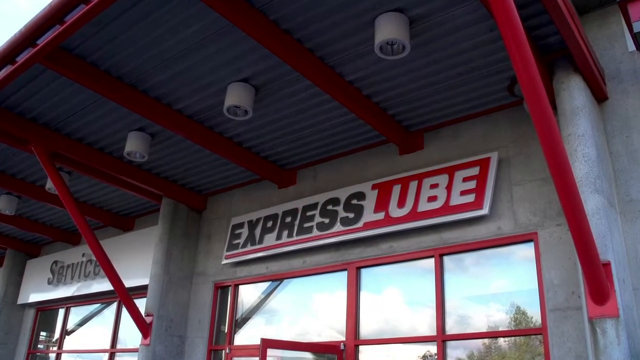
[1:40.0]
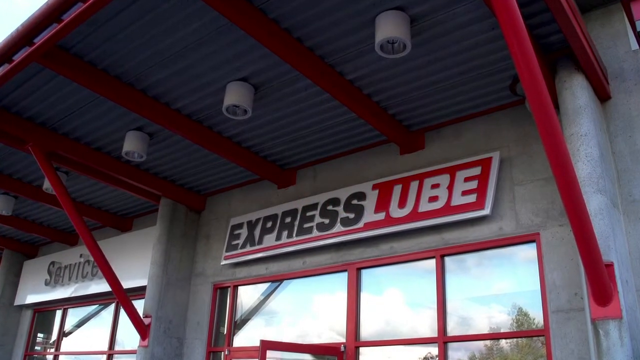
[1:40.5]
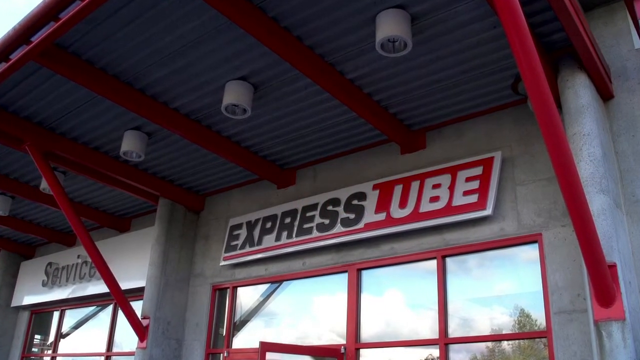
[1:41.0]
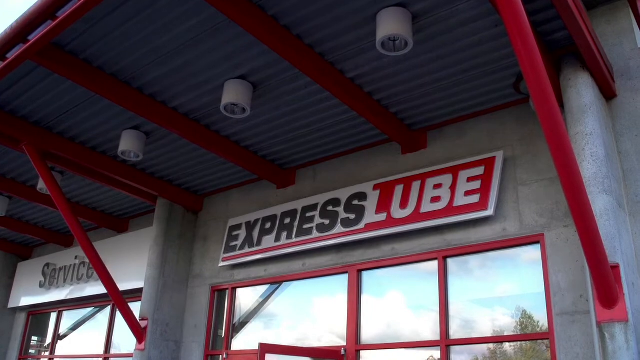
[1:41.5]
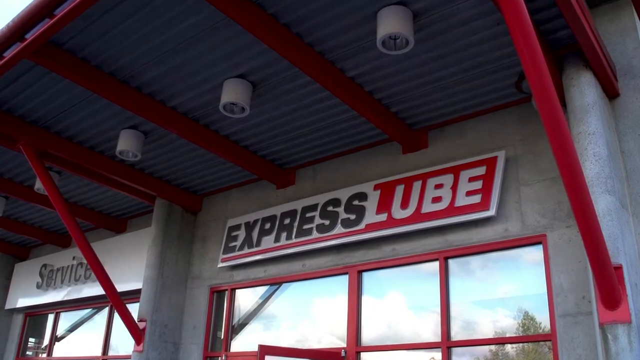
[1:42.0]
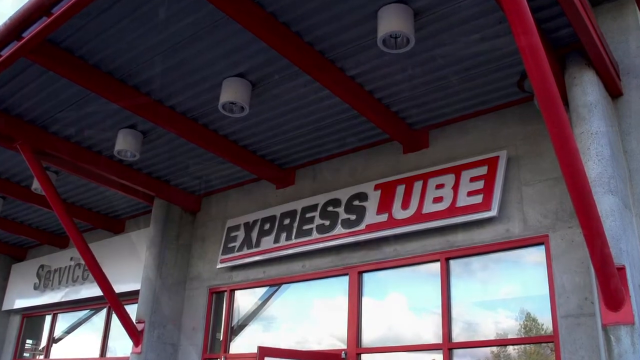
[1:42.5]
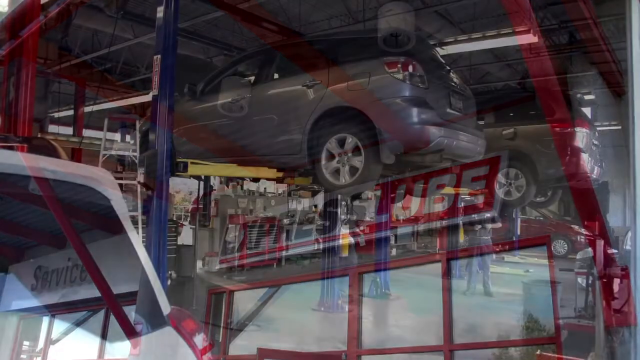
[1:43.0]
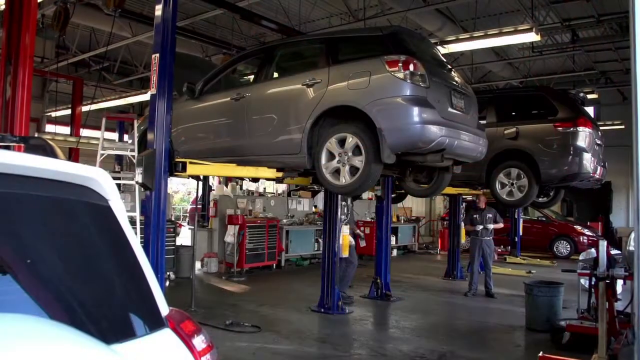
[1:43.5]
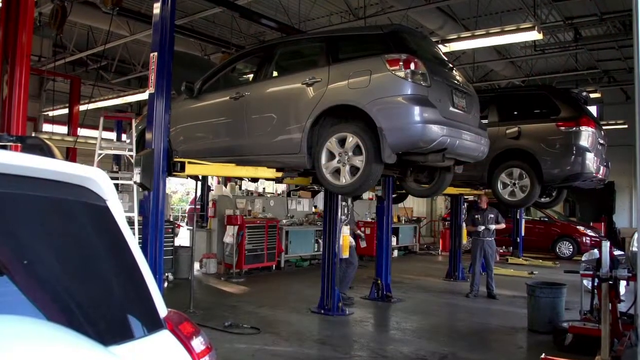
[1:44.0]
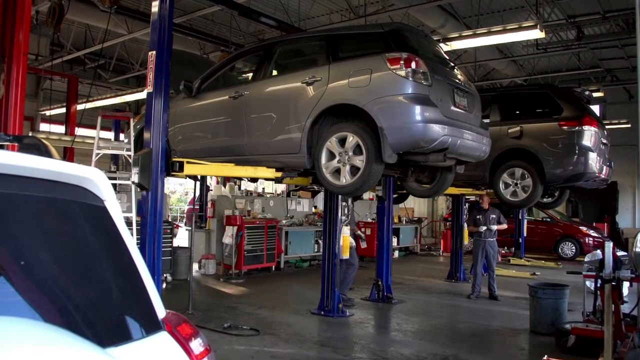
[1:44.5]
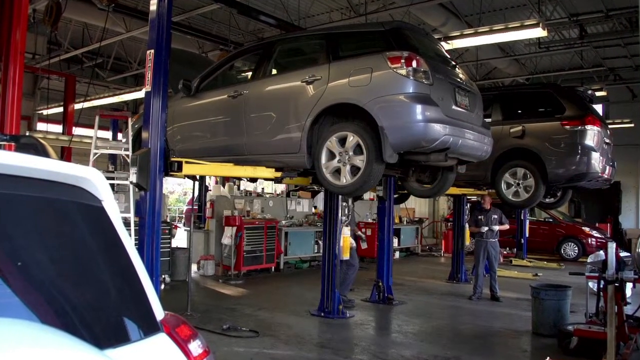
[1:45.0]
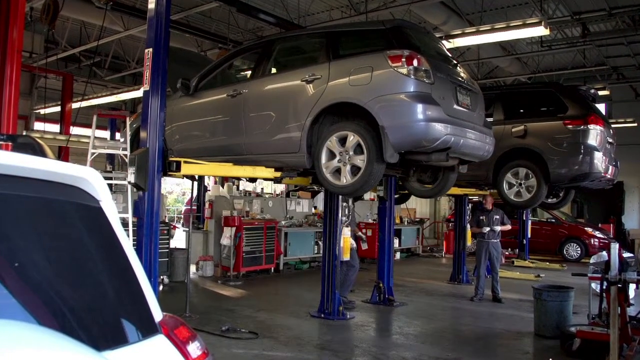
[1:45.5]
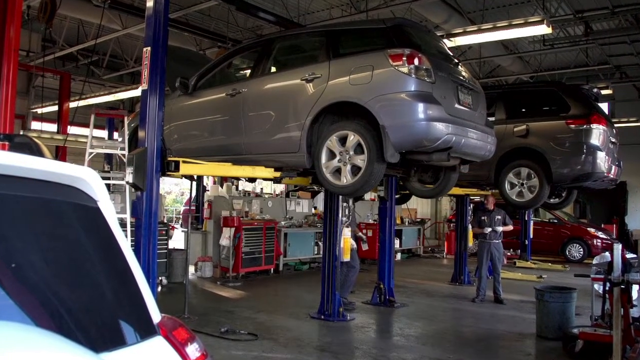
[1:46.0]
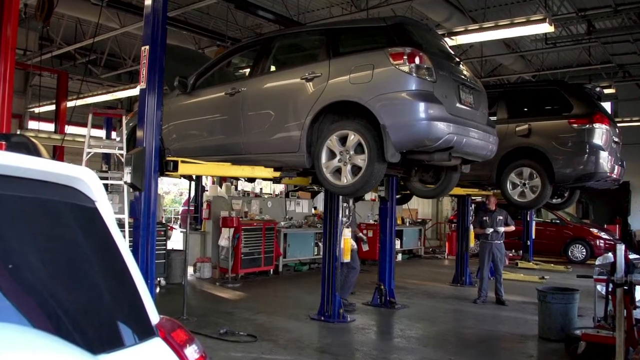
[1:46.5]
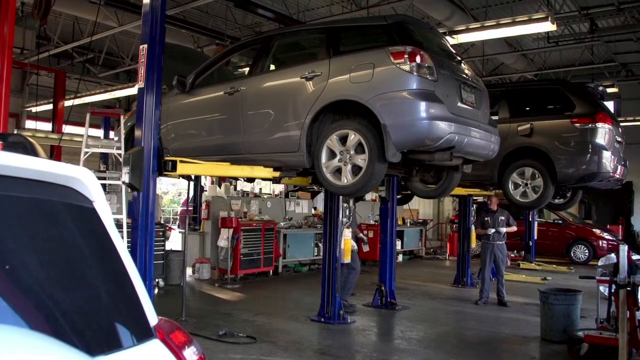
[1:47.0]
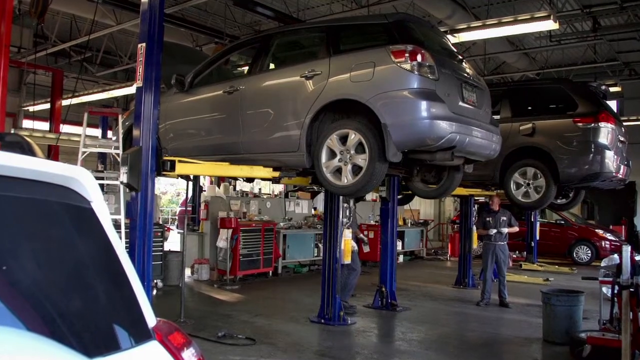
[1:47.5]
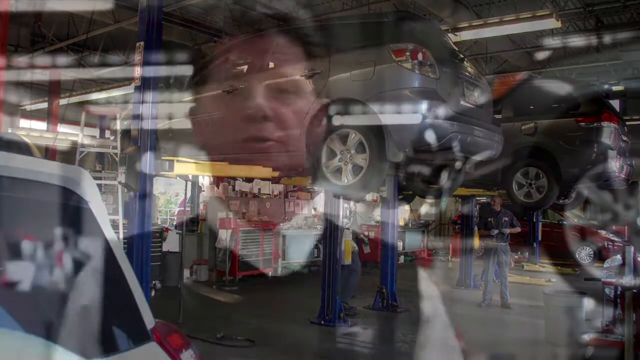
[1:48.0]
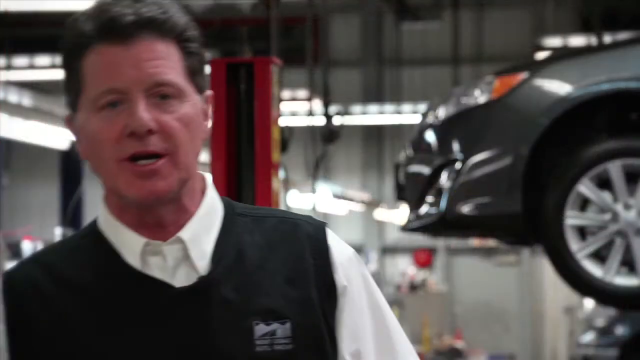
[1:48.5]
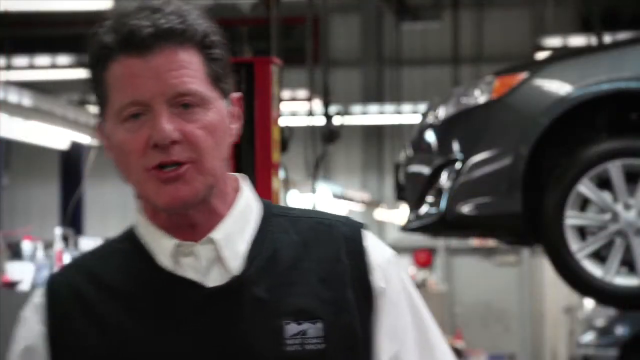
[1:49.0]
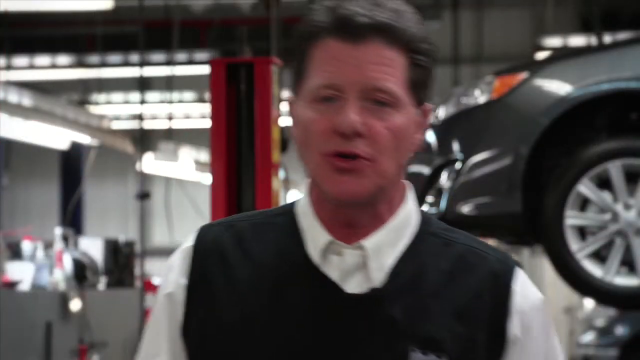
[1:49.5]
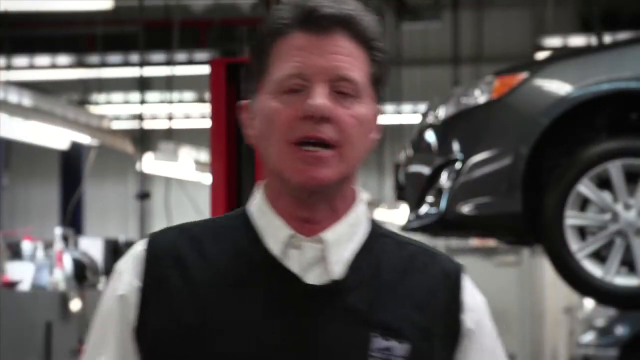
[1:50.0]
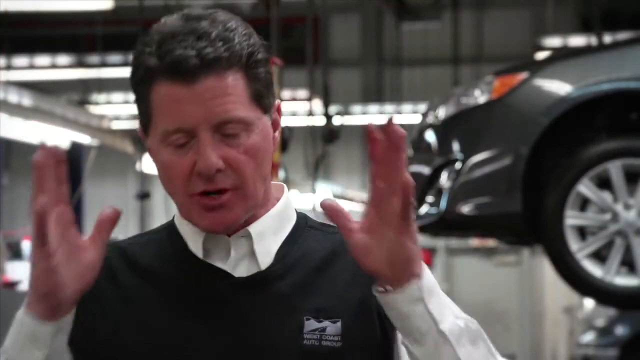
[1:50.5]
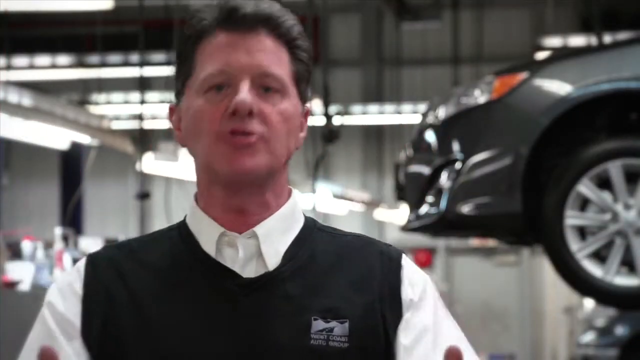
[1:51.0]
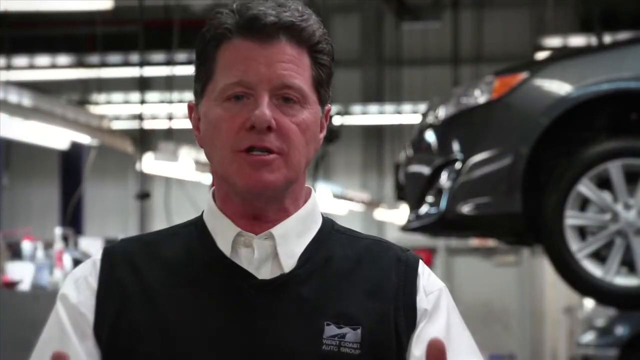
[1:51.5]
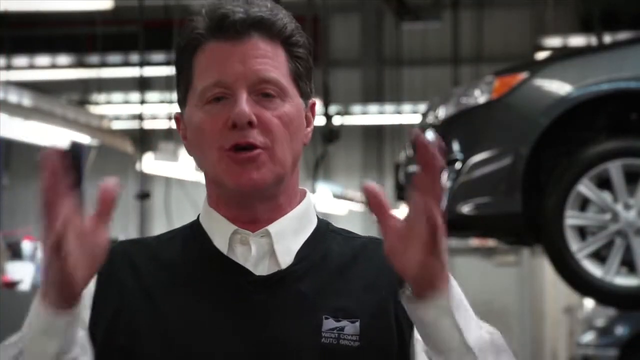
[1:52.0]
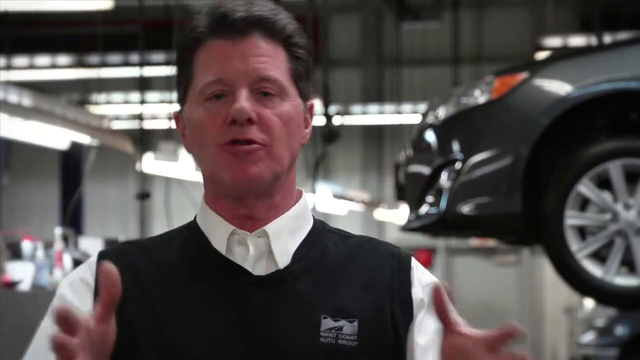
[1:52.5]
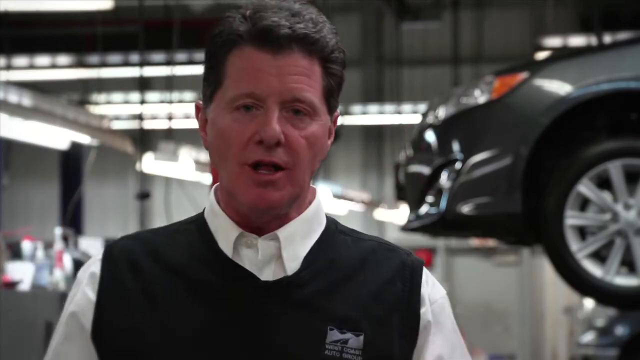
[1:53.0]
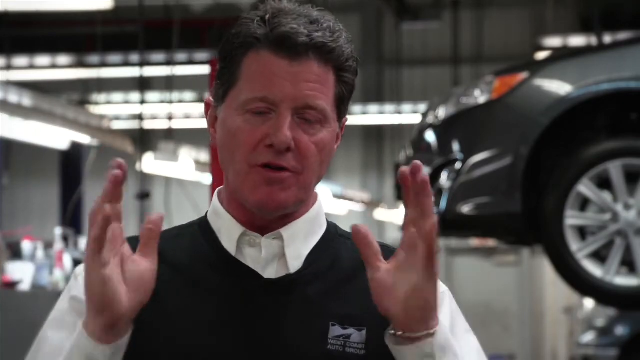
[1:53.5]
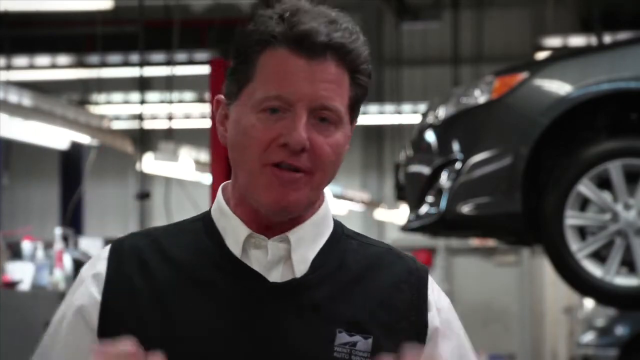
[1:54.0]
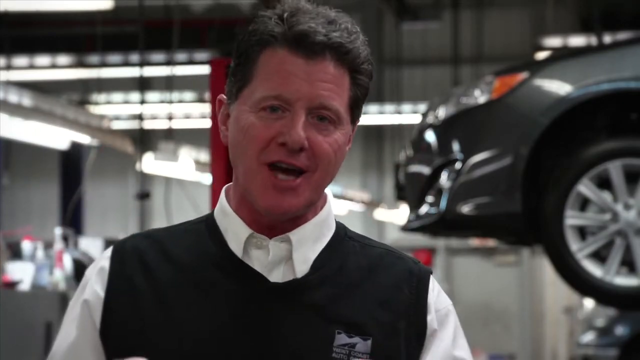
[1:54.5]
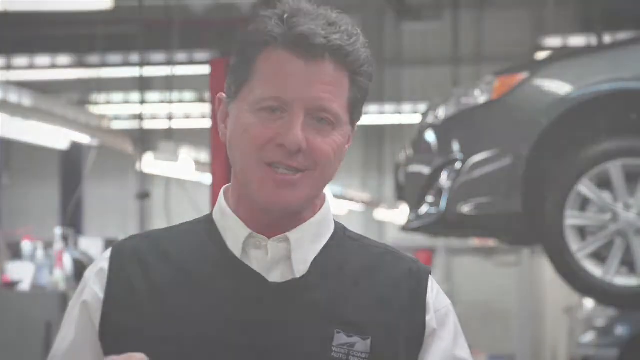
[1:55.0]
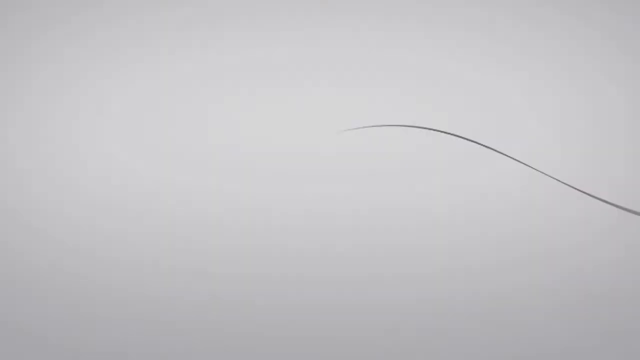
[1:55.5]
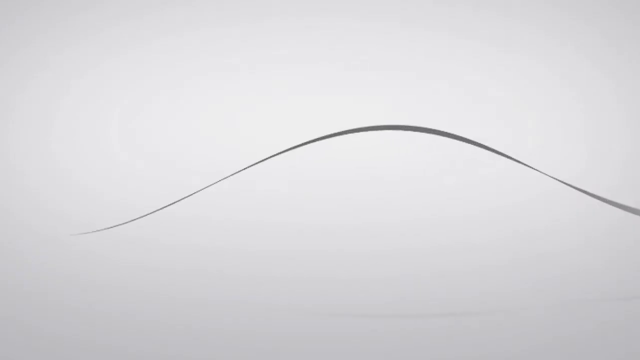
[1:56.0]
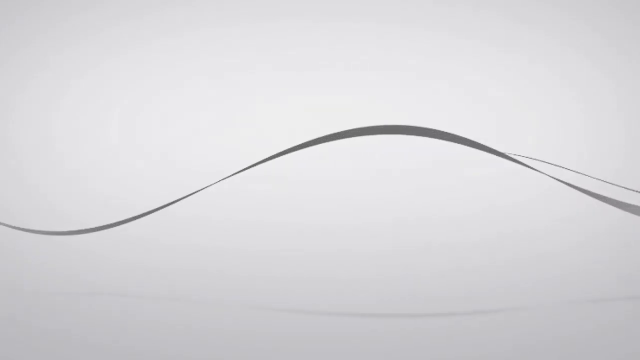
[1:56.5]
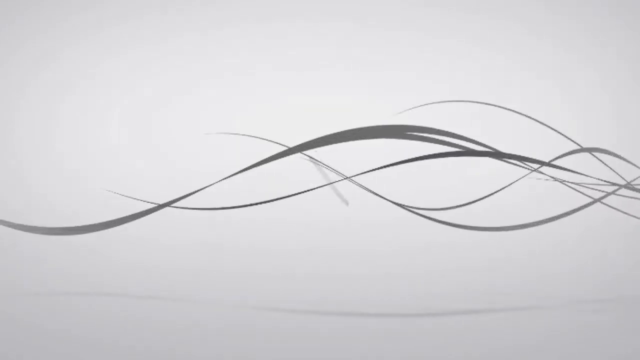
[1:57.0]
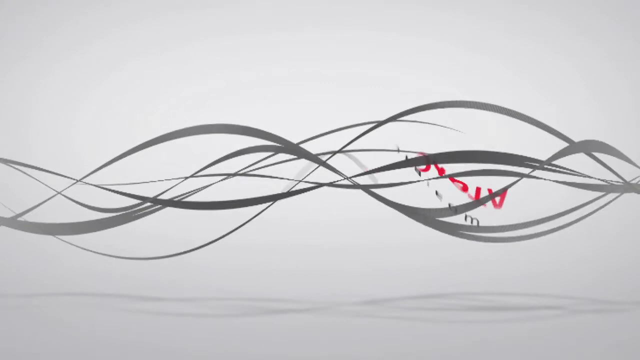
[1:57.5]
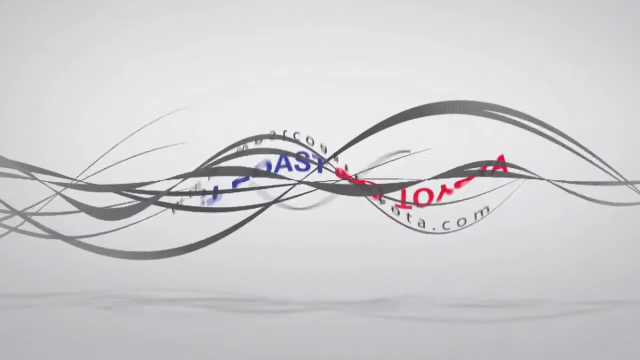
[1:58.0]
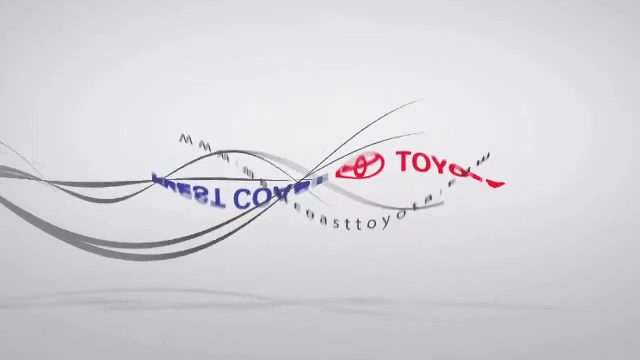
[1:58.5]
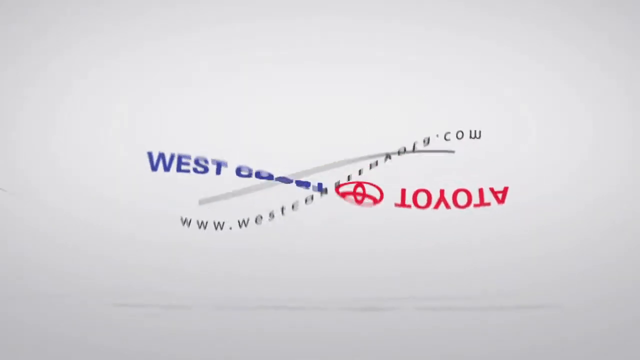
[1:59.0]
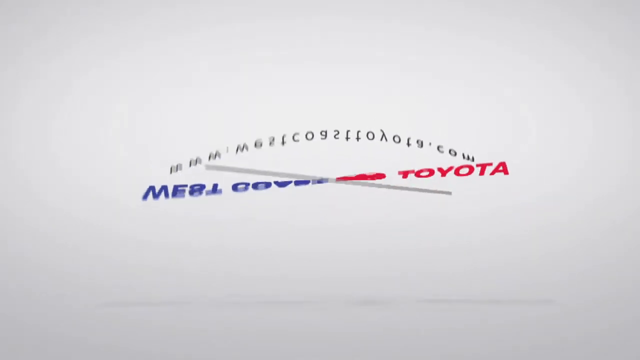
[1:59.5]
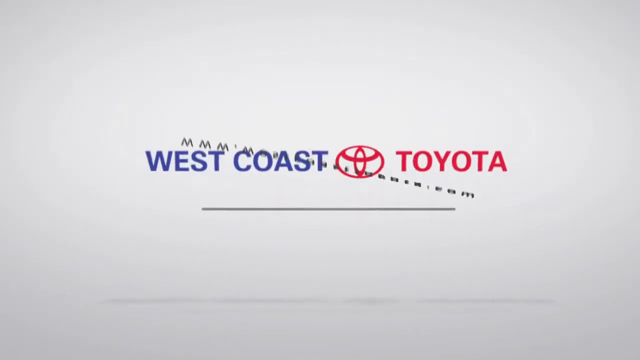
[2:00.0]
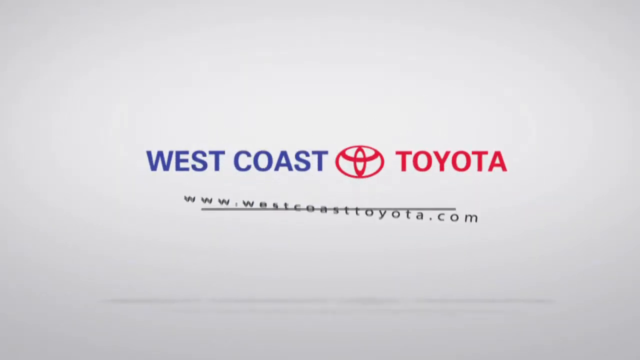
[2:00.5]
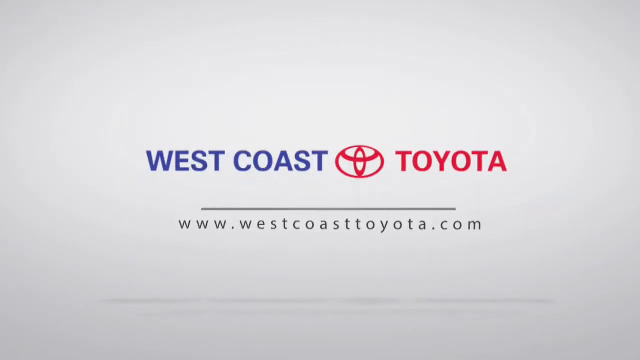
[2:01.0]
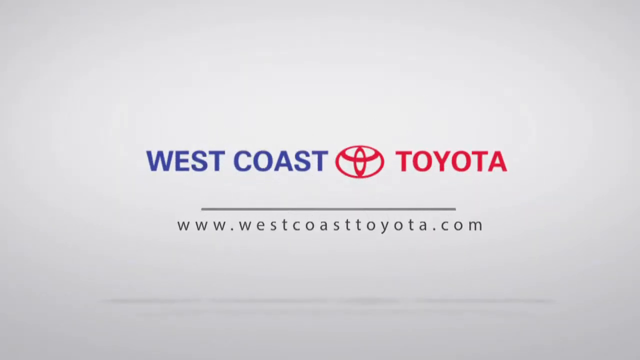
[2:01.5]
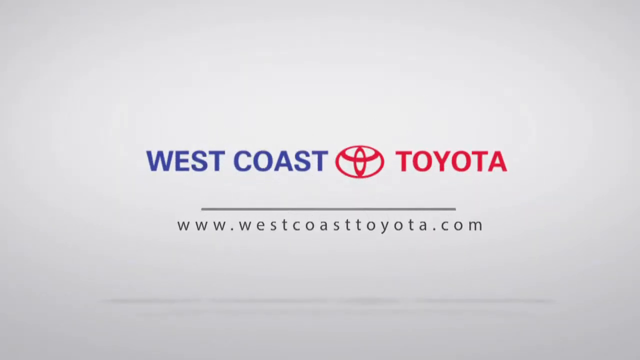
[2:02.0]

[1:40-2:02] The camera shows the exterior of the car shop, where a logo on the wall reads "Express Lube," with windows below it; "Lube" has a red background. It then cuts to two large vans elevated off the ground by machines pushing them up toward the ceiling so people can work underneath the vehicles. Next, a man wearing a white dress shirt with a black shirt over it talks to the camera. He has brown hair, is clean-shaven and seems to be happy. Behind him a car is elevated off the ground, and there are lights on the ceiling. The video ends with a logo of strings that disappear, and the text "West Coast Toyota www.westcoasttoyota.com" is written out.